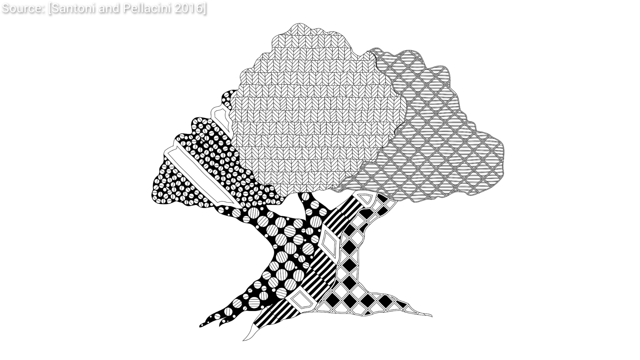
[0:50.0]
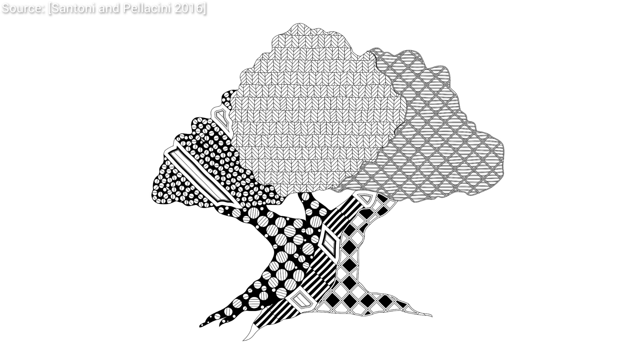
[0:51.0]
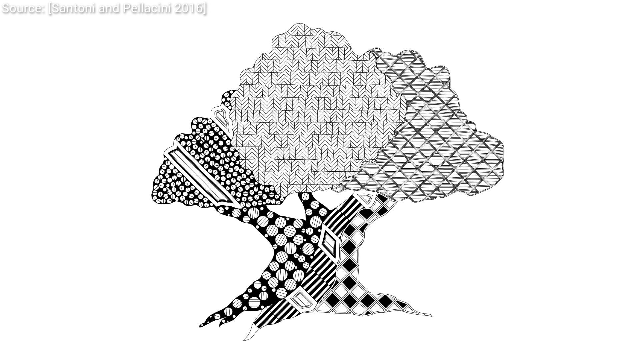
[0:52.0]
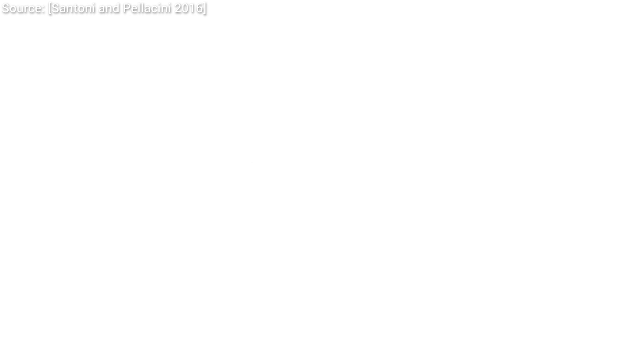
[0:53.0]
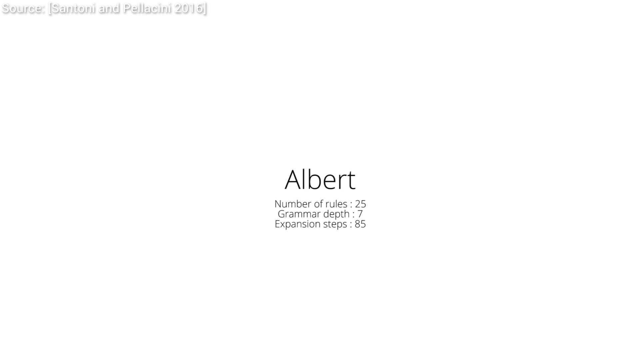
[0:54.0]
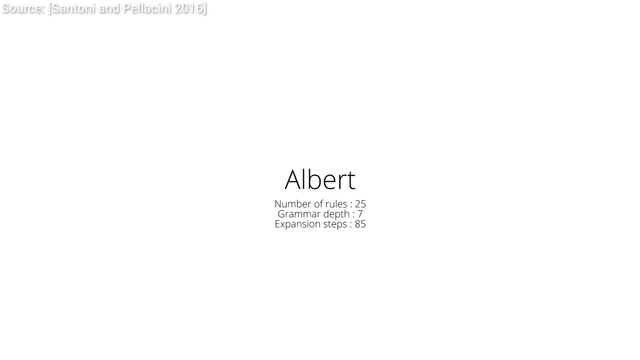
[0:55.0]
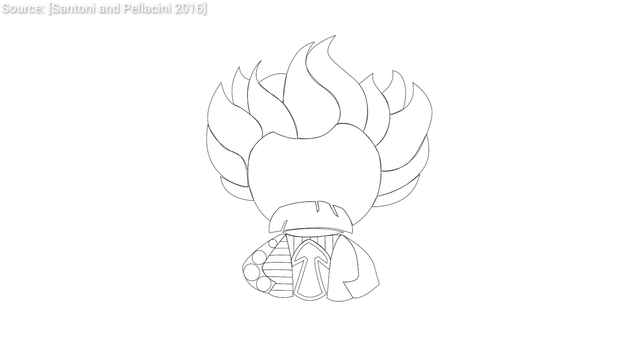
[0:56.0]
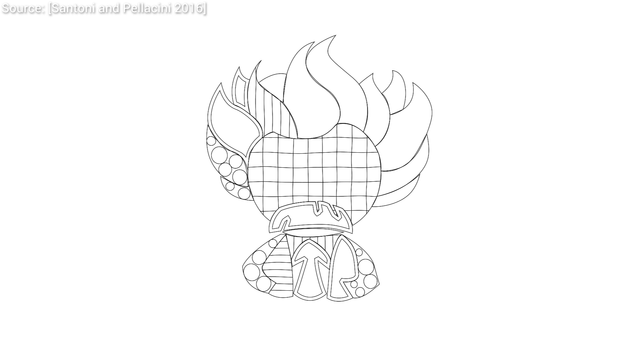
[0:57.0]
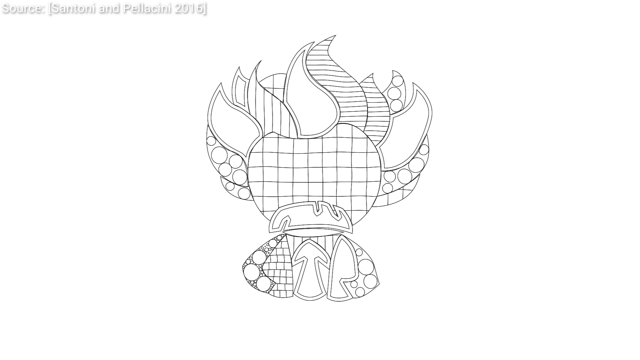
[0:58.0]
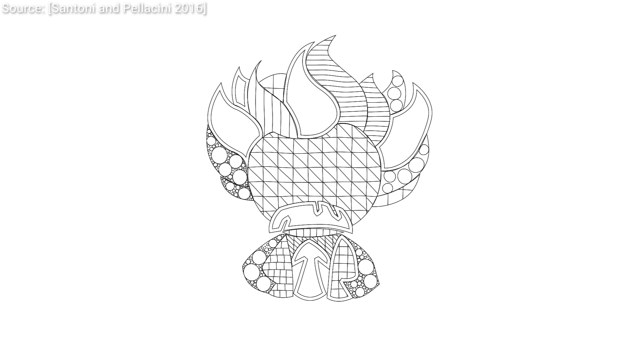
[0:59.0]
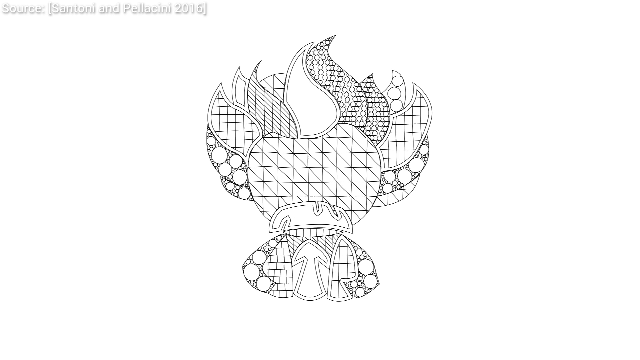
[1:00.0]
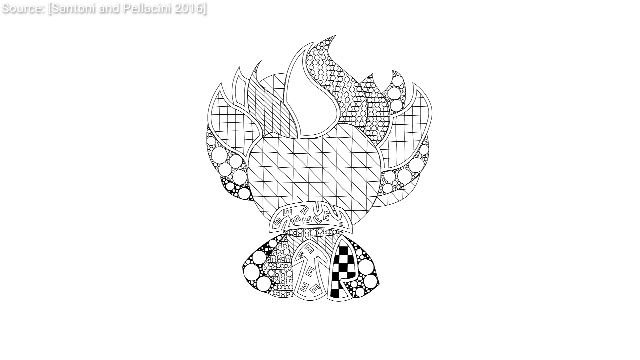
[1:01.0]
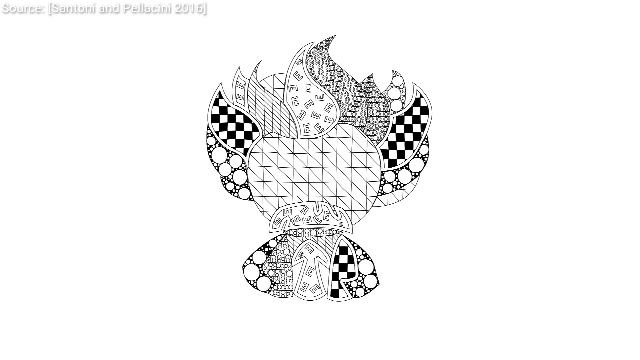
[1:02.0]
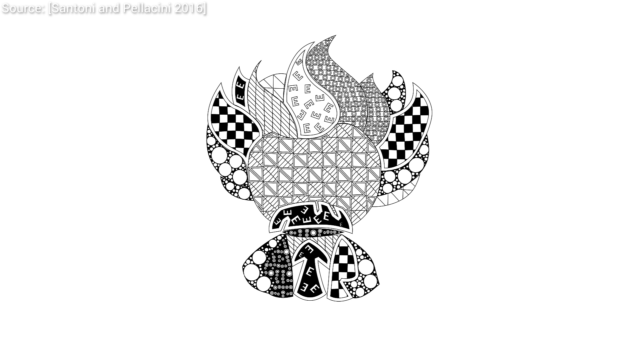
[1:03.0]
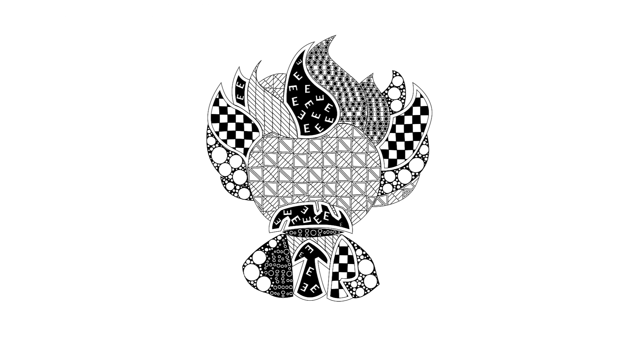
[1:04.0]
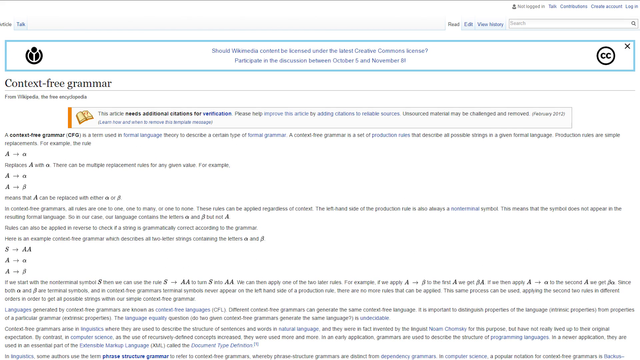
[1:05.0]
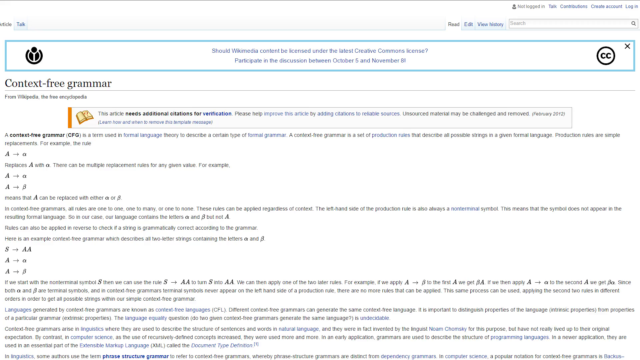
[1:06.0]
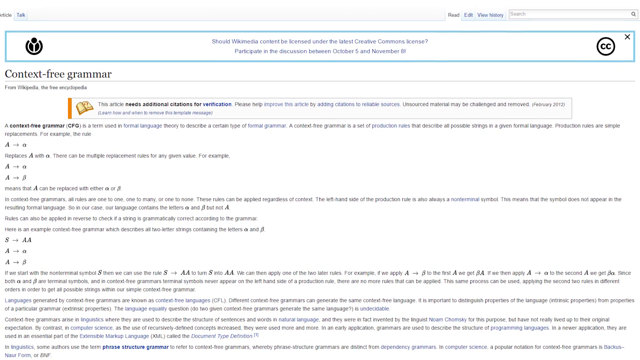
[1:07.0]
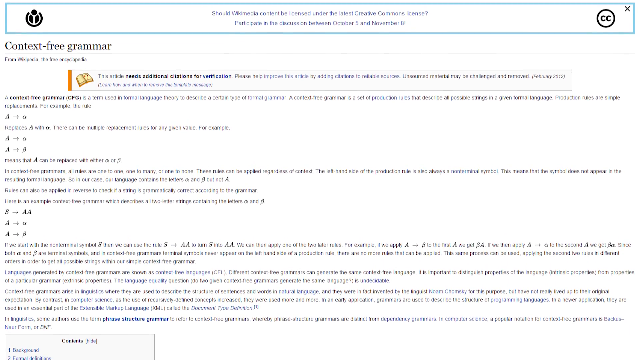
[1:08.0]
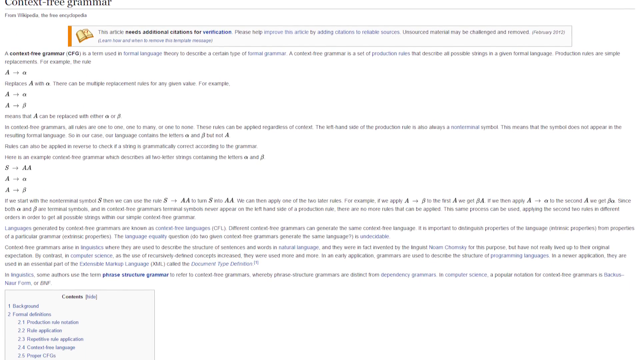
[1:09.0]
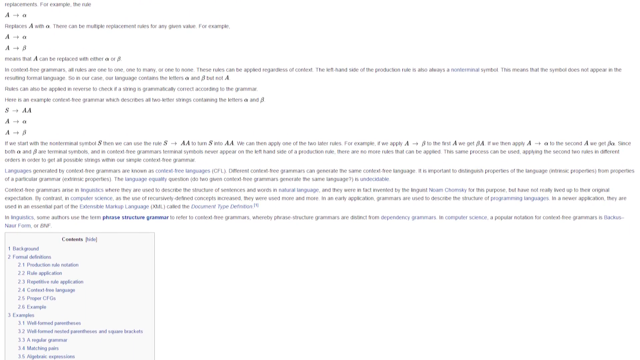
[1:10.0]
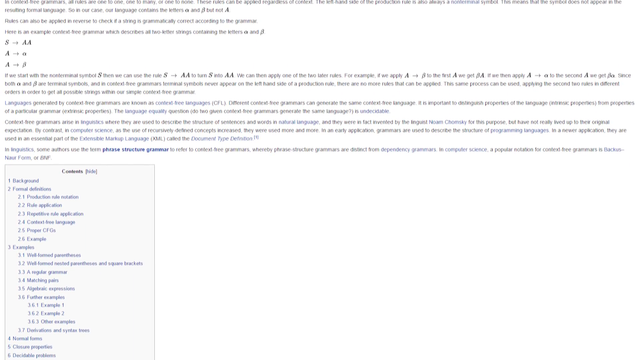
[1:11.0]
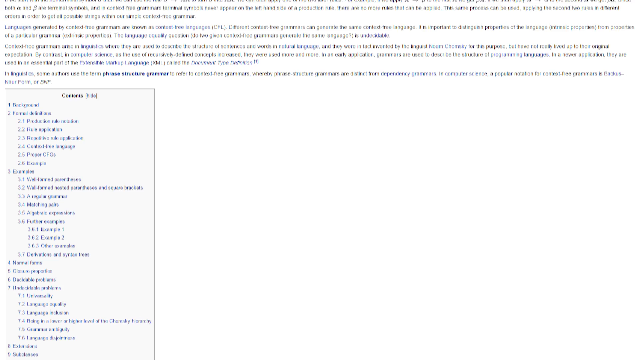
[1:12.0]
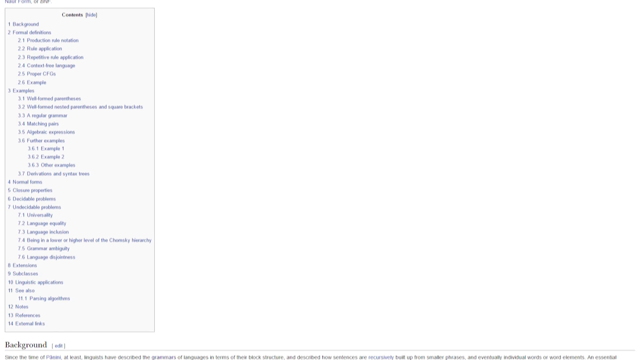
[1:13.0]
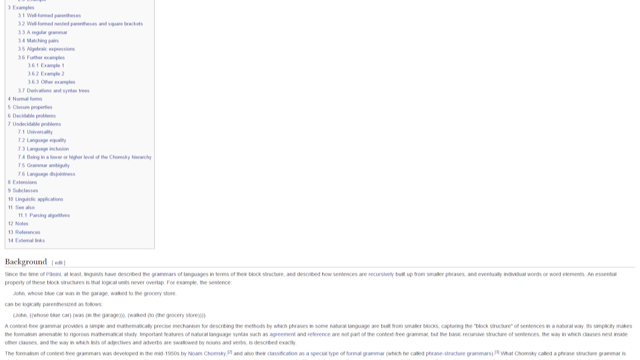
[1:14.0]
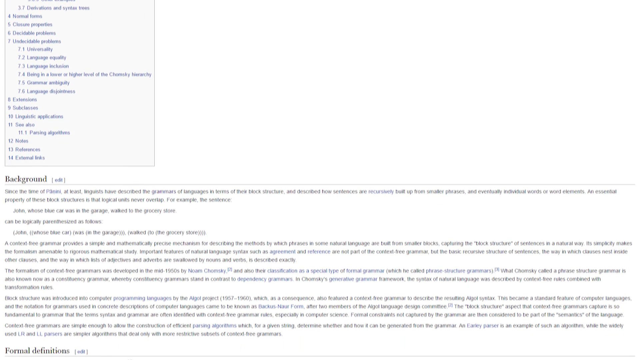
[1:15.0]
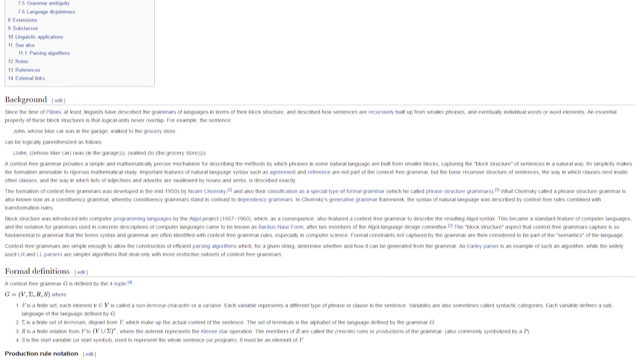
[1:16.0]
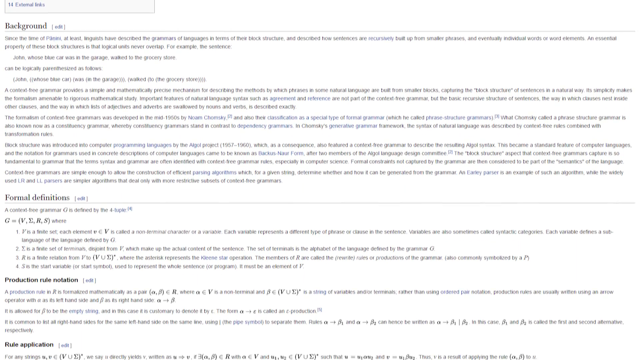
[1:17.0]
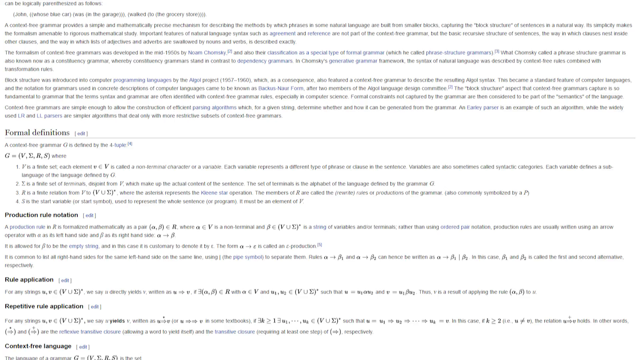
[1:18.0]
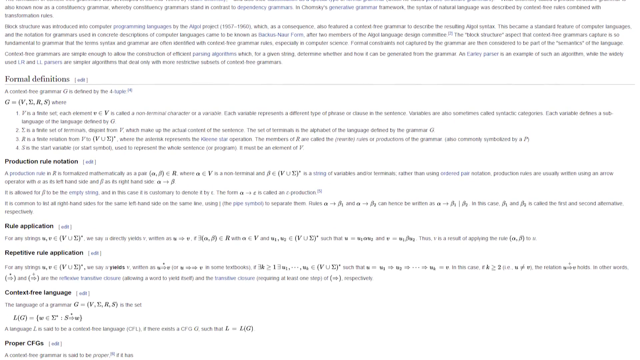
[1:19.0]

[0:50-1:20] The tree continues in the middle, covered in black-and-white design patterns. The tree then disappears, and text and numbers appear in the middle: the name "Albert," with "Number of rules 25, Grammar Depth 7, Expansion steps 85" underneath. This text disappears, and another figure that looks like a doll appears, slowly being shaded in with shapes, all in black and white. It looks like a doll with hair, with a face in the middle; the hair looks like flames going upward, and a mustache appears. Next comes a webpage document, a Wikipedia article, with "context free grammar" in the top left corner. The user scrolls downward through the page, past background information and a headline reading "formal definitions," and continues scrolling down the context free grammar wiki page.